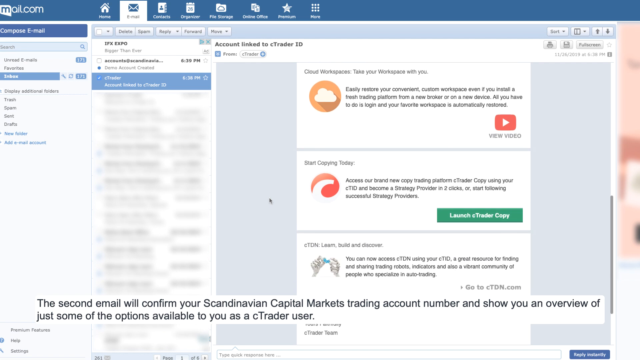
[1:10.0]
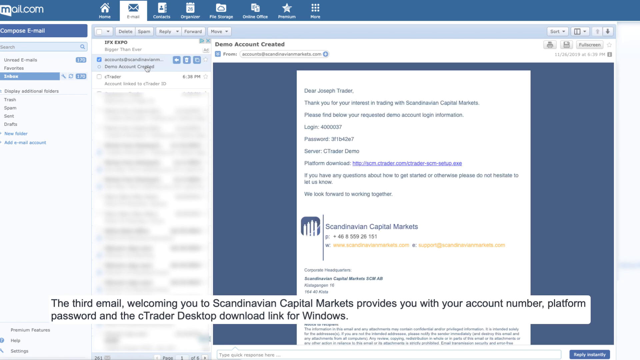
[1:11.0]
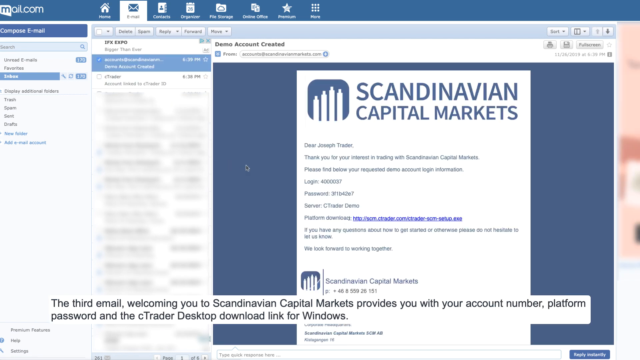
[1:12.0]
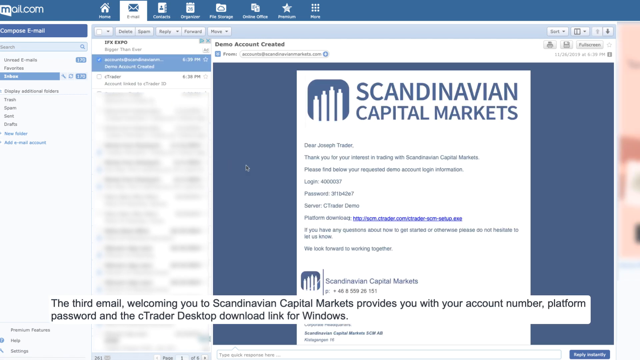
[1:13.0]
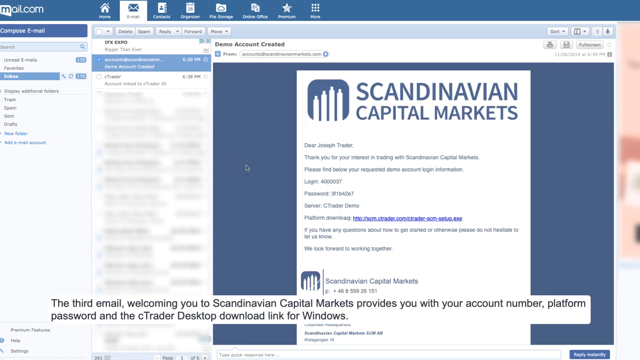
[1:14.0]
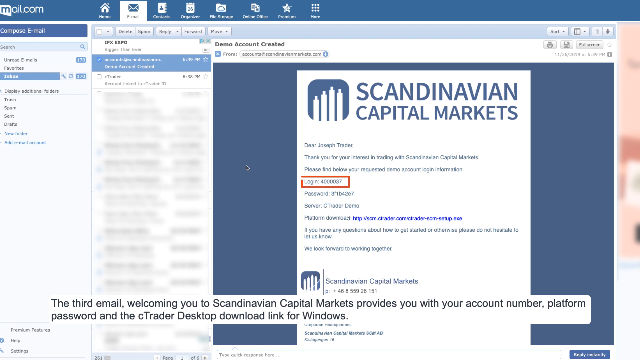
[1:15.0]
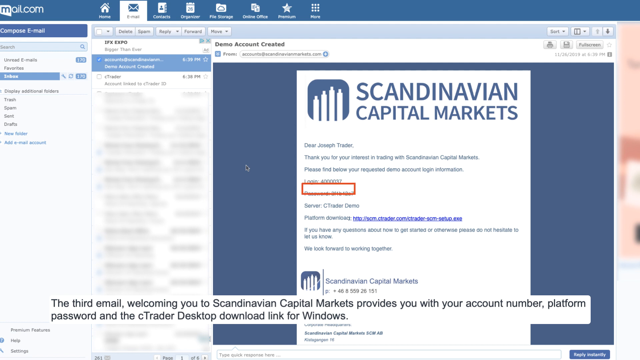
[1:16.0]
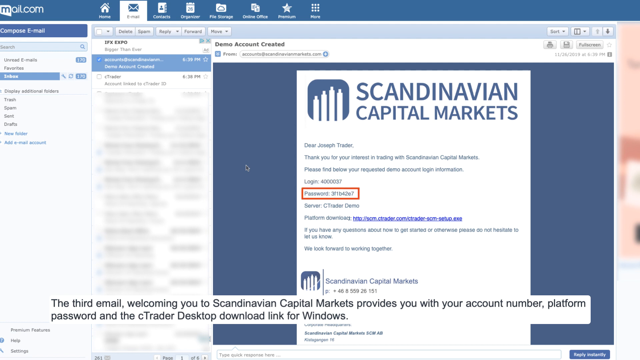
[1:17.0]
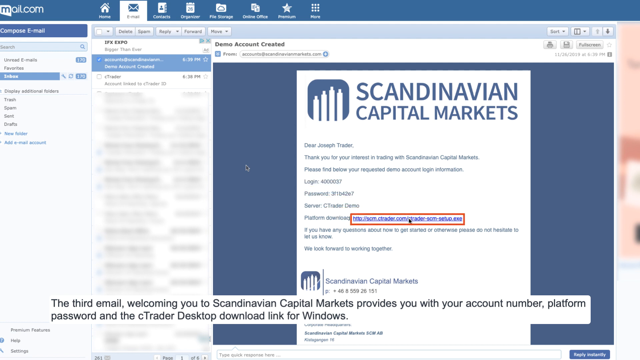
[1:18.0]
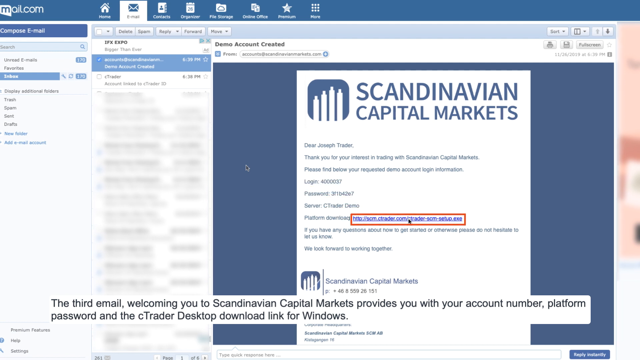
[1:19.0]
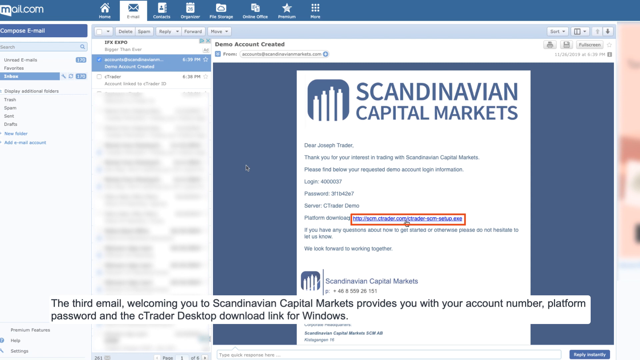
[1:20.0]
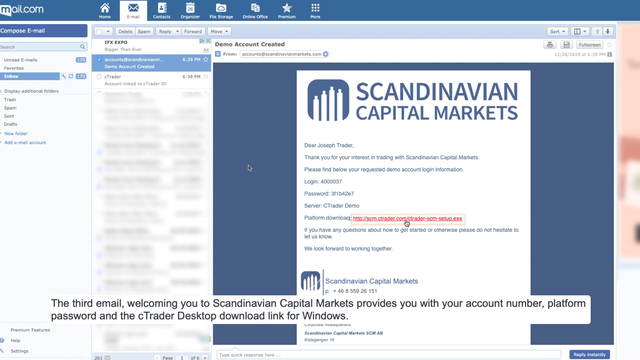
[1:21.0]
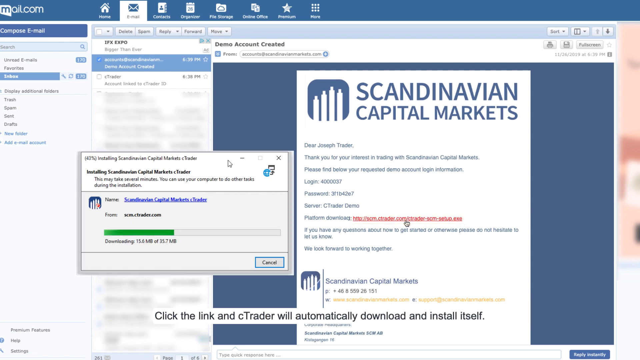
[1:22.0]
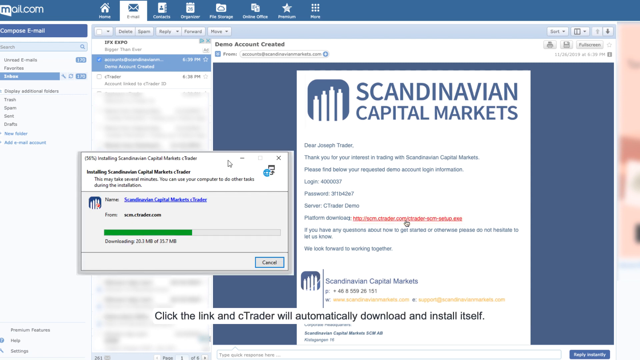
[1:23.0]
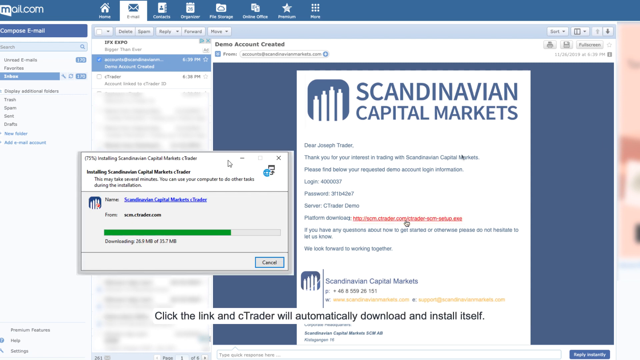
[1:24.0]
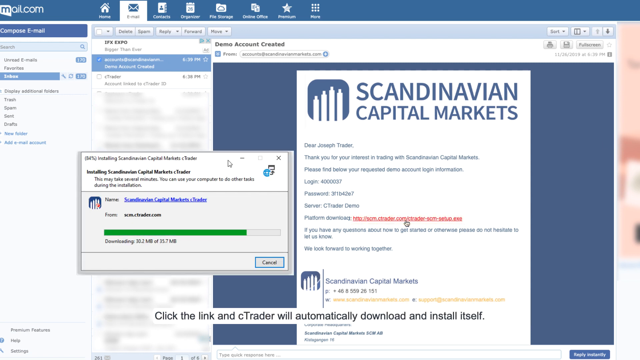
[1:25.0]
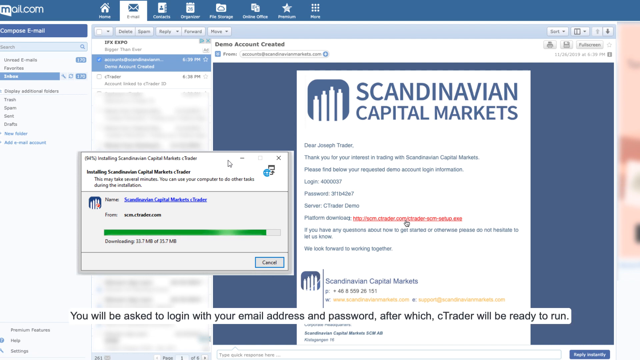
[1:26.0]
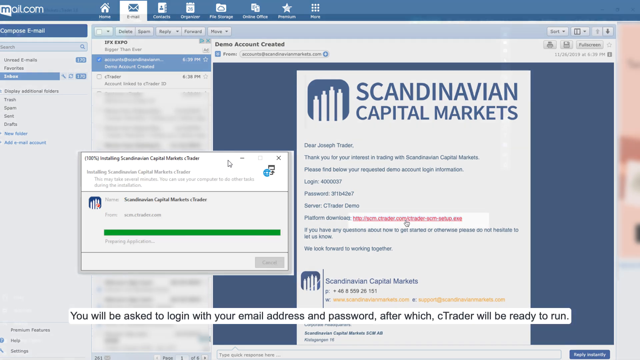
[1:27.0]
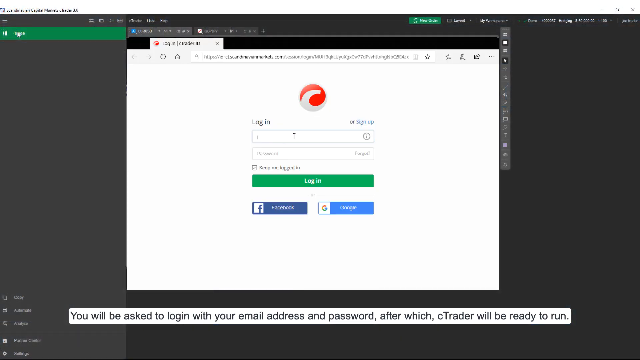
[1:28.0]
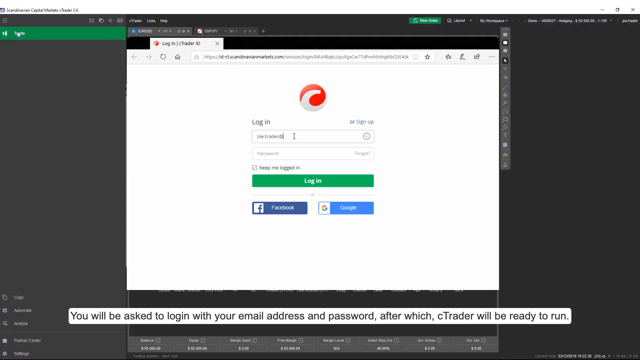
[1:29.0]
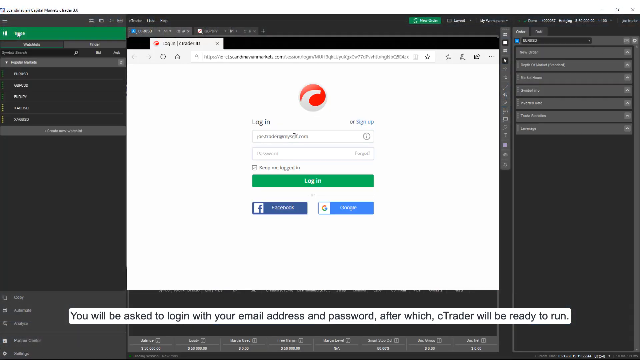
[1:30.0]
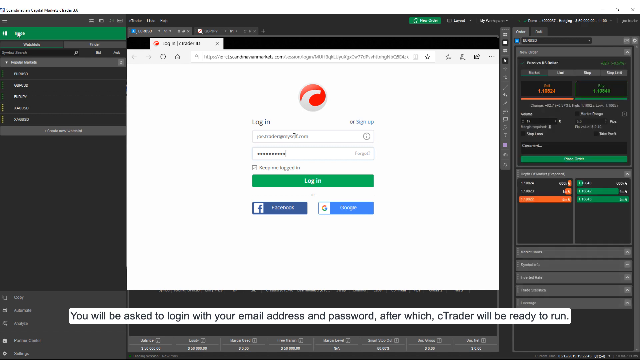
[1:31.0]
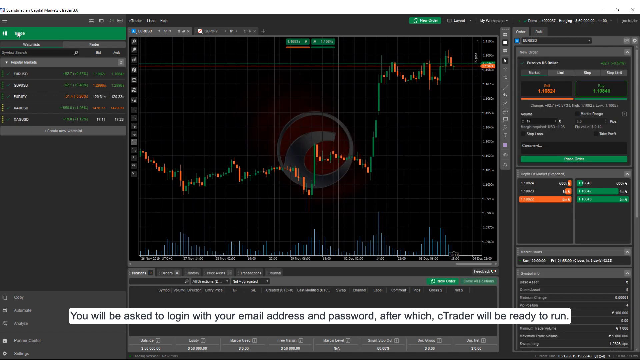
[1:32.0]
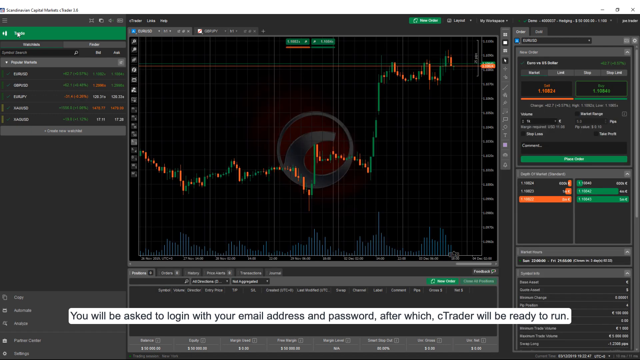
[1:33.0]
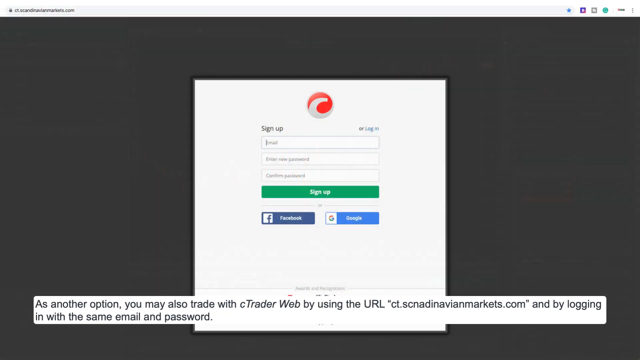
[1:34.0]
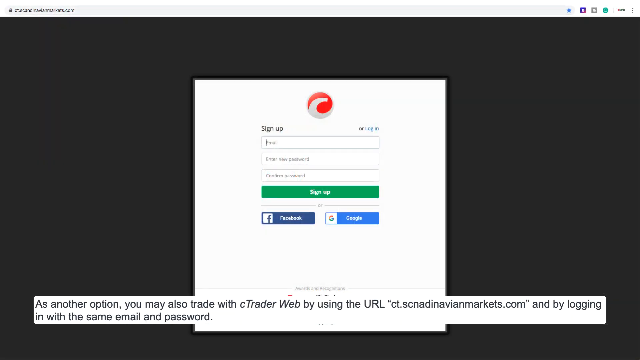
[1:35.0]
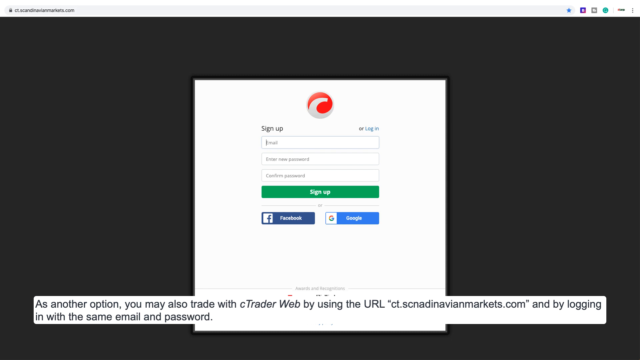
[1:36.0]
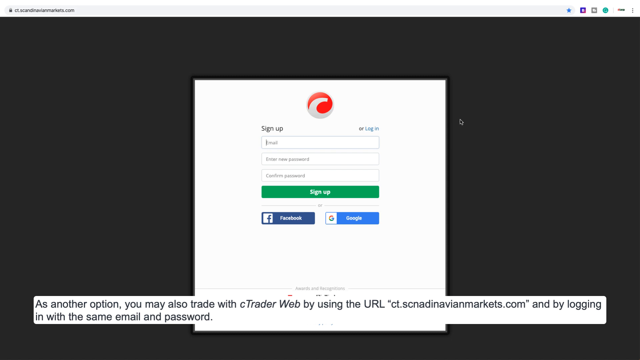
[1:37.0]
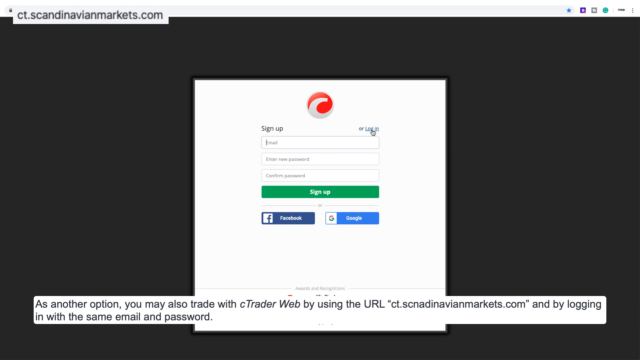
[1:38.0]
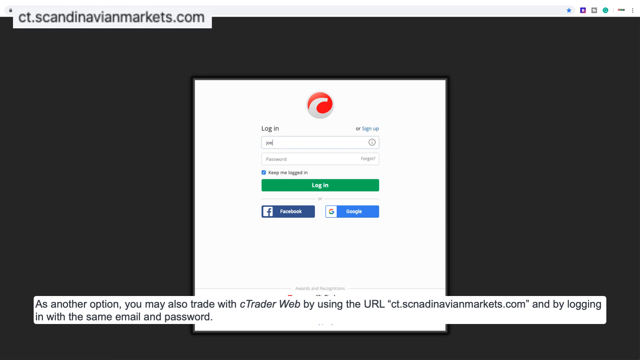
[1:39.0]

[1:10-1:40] The email is clicked on, showing the account confirmation. The logo is highlighted in a red box, displaying a number for the login. The cursor then moves down to a blue hyperlink, which is also highlighted with a red box. Once the hyperlink is clicked, a download box pops up to the left of the page, and a green progress bar fills at a steady pace. When the download is complete, the page fades out to a login page for cTrader. Once the login information is filled in, the page changes to the stock trading page, showing various graphs and numbers. The stock page then fades back to the cTrader login page, showing how to switch from sign-in to login: the blue button in the upper right corner above the sign-in information is clicked, switching back and forth between sign up and login.